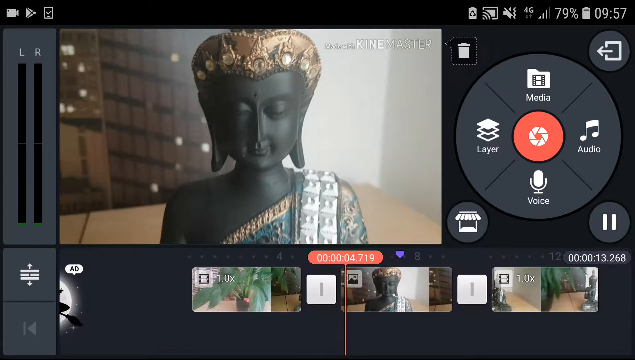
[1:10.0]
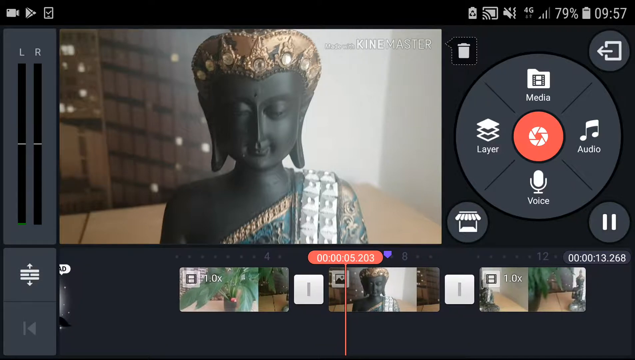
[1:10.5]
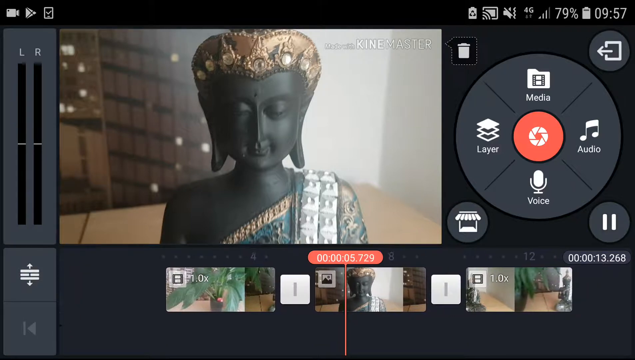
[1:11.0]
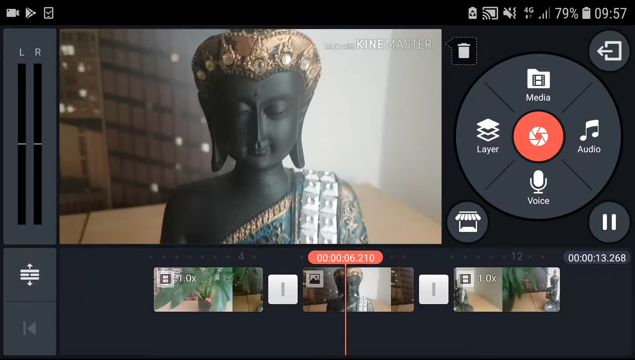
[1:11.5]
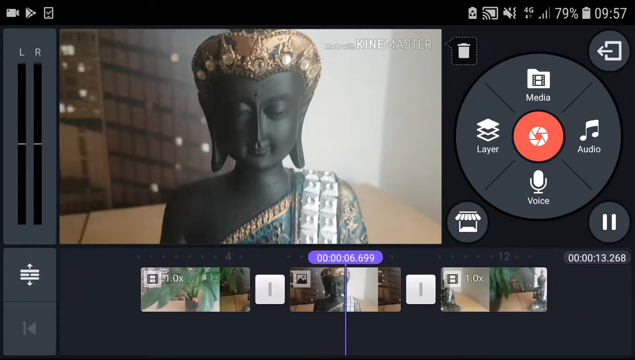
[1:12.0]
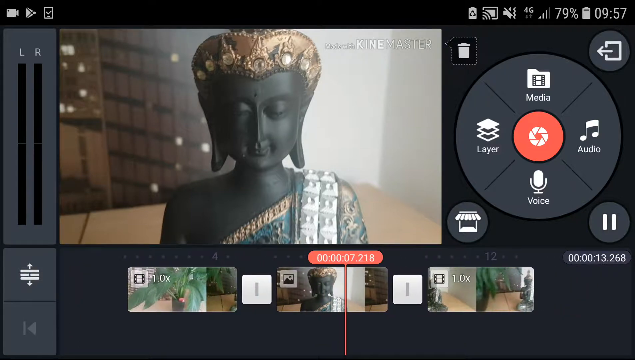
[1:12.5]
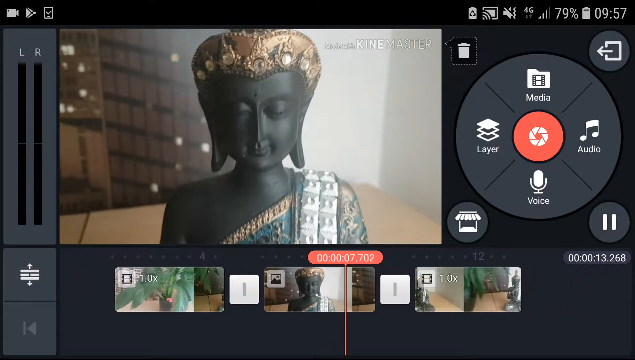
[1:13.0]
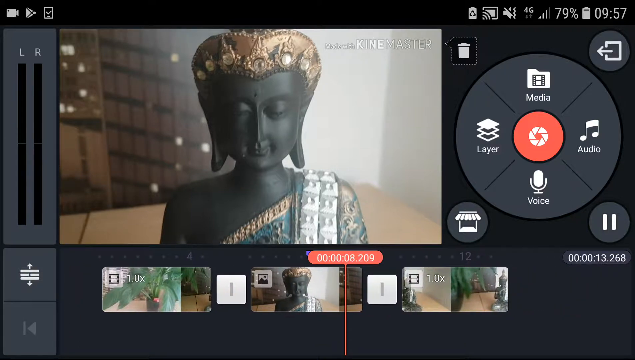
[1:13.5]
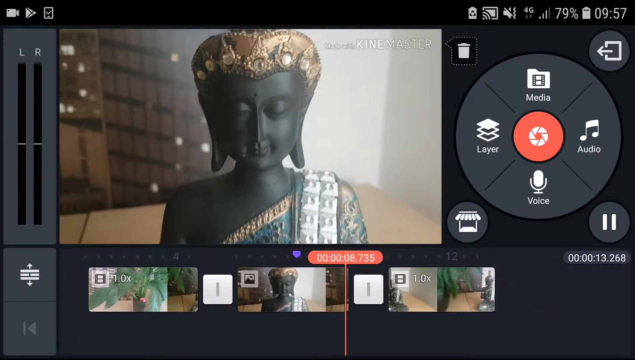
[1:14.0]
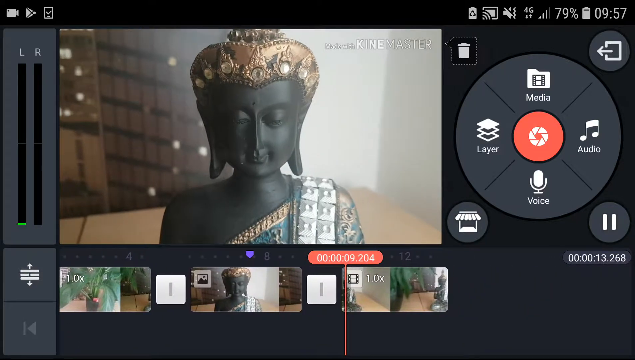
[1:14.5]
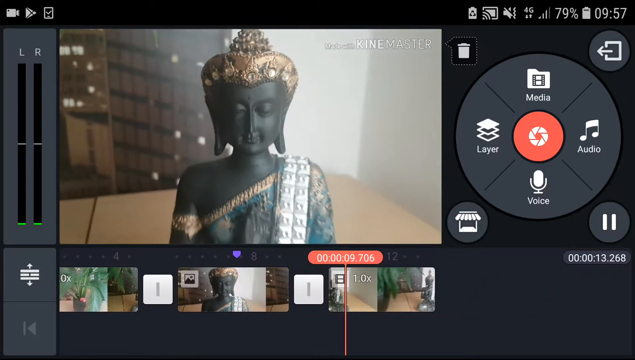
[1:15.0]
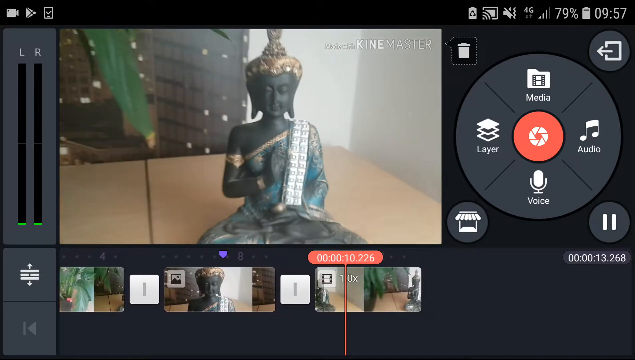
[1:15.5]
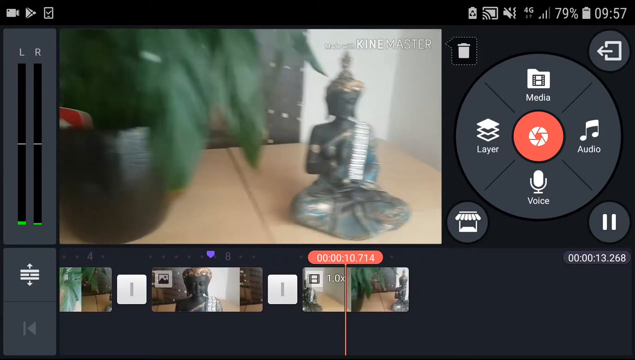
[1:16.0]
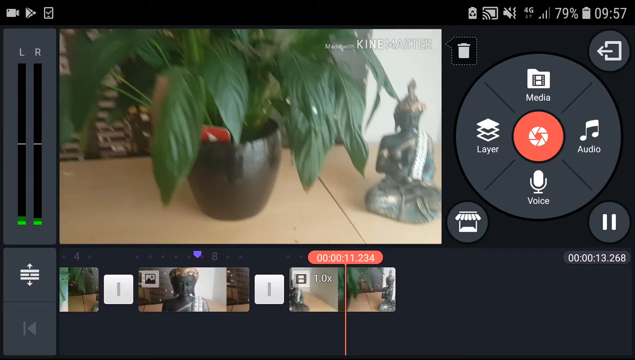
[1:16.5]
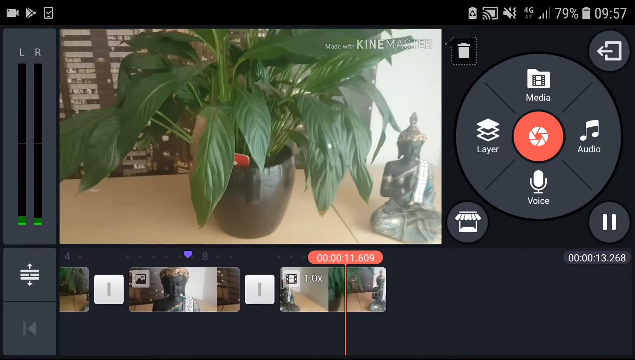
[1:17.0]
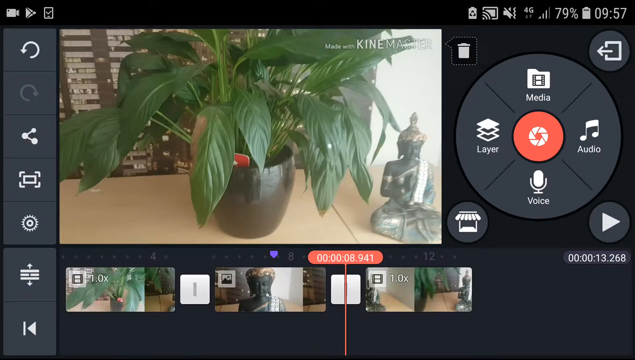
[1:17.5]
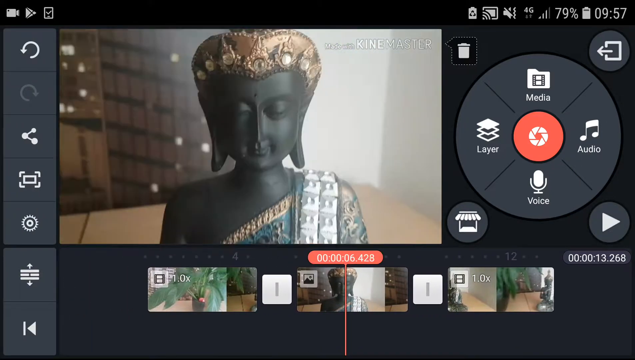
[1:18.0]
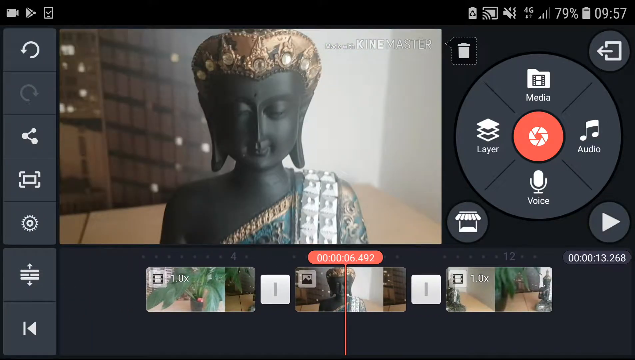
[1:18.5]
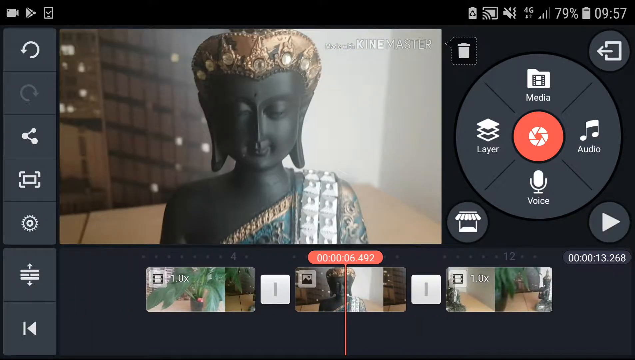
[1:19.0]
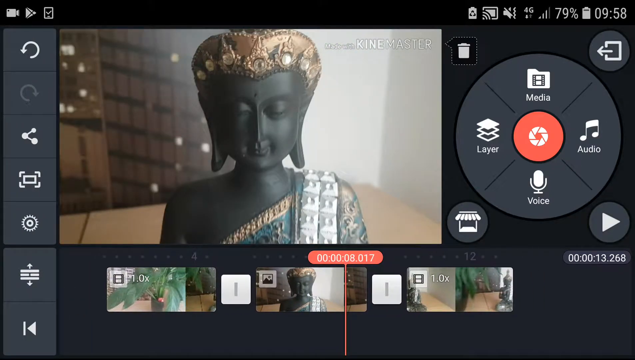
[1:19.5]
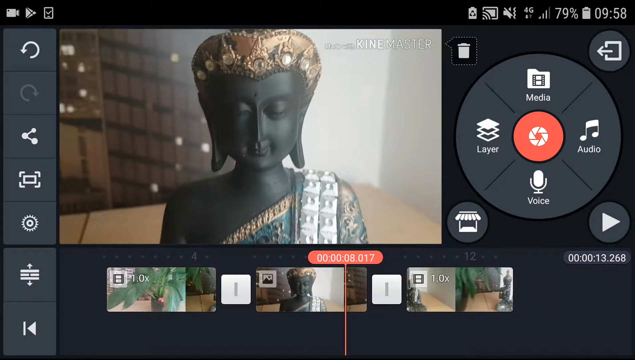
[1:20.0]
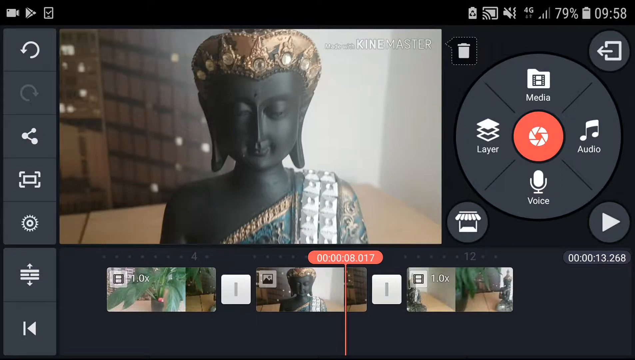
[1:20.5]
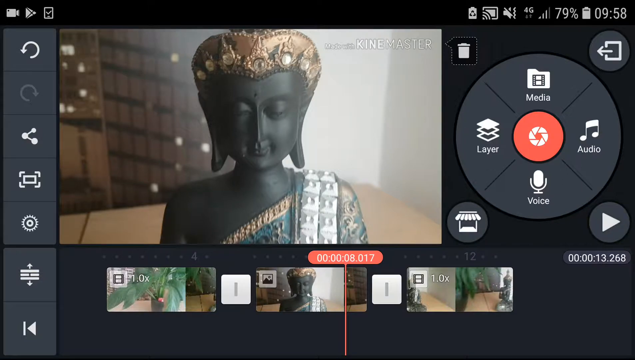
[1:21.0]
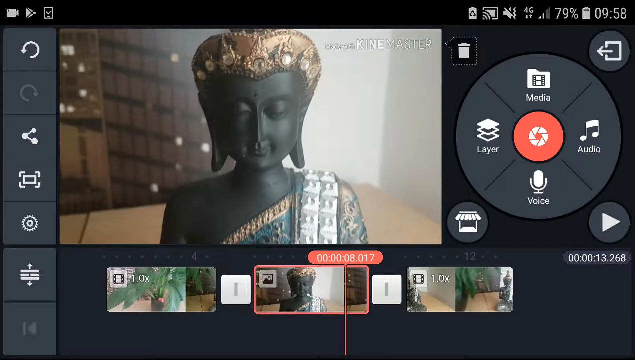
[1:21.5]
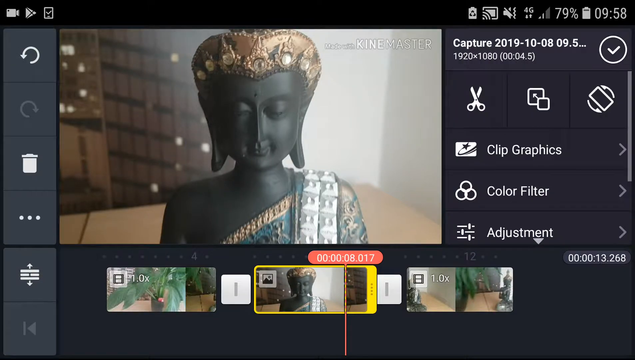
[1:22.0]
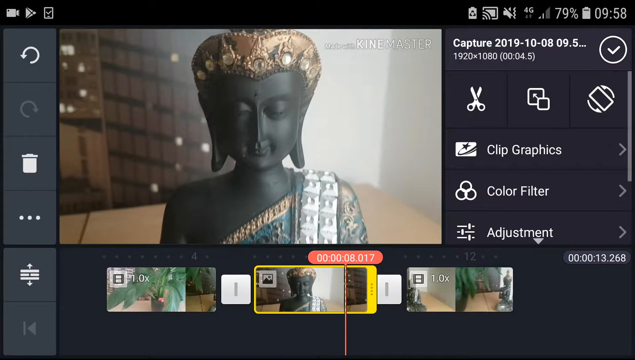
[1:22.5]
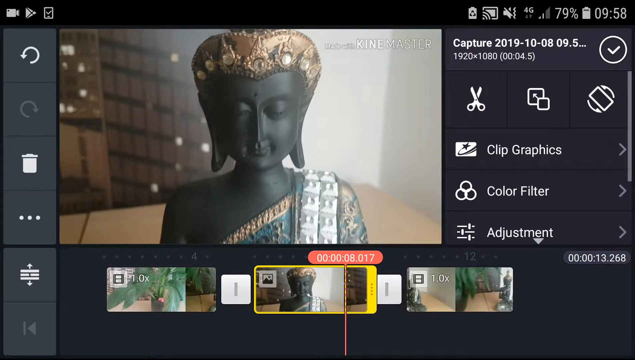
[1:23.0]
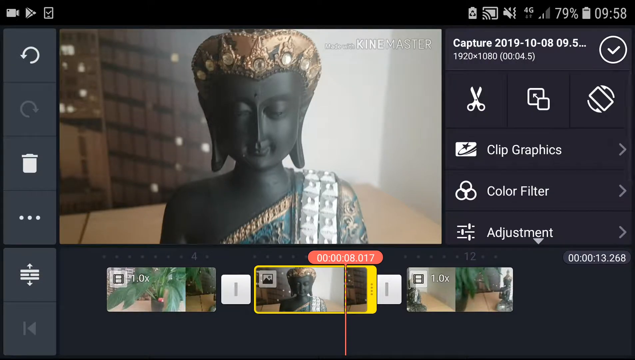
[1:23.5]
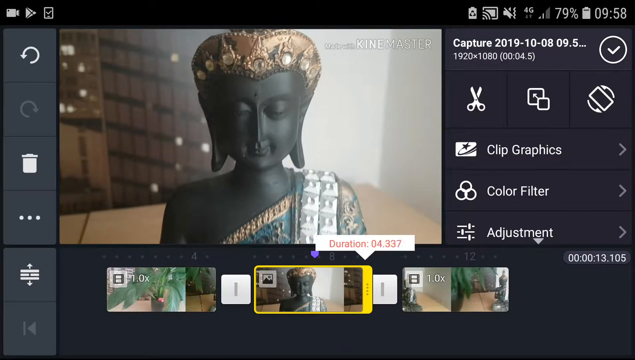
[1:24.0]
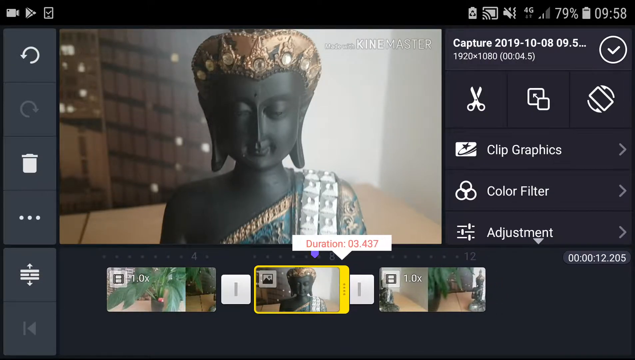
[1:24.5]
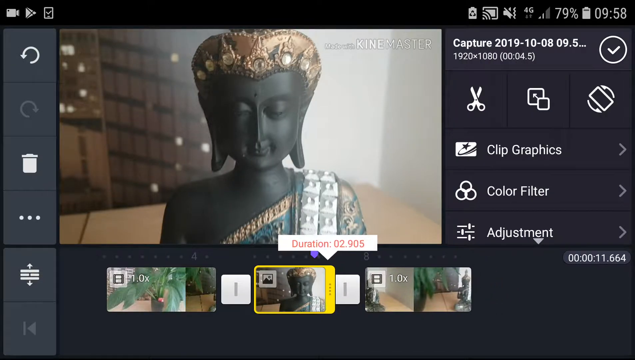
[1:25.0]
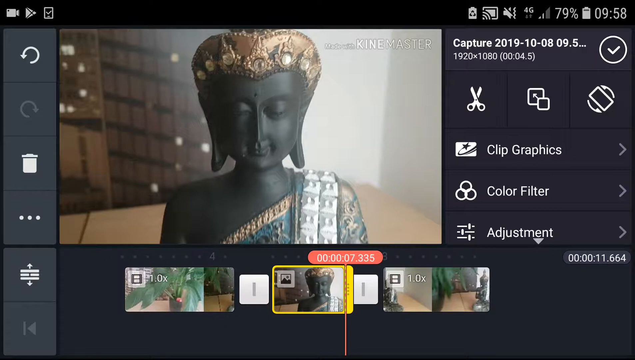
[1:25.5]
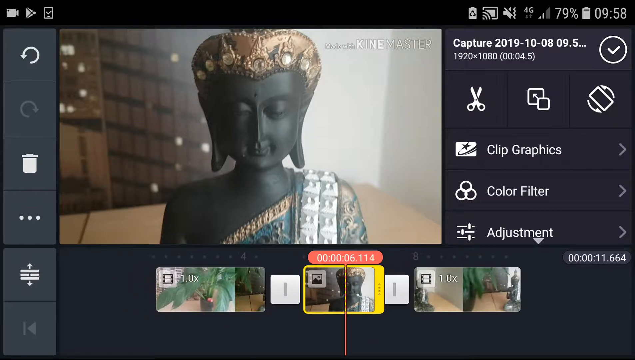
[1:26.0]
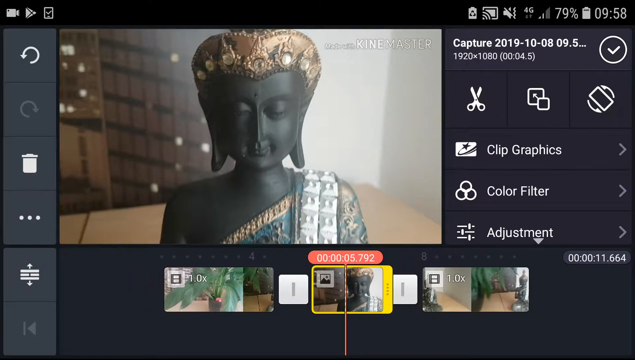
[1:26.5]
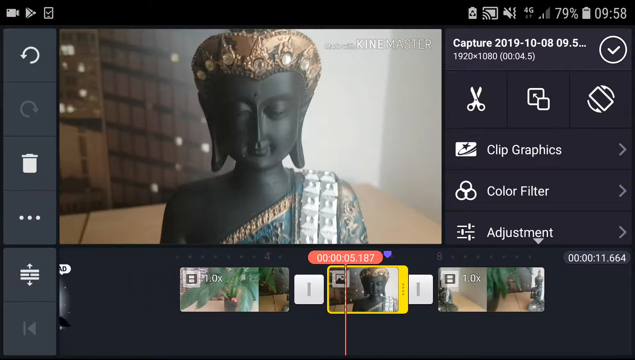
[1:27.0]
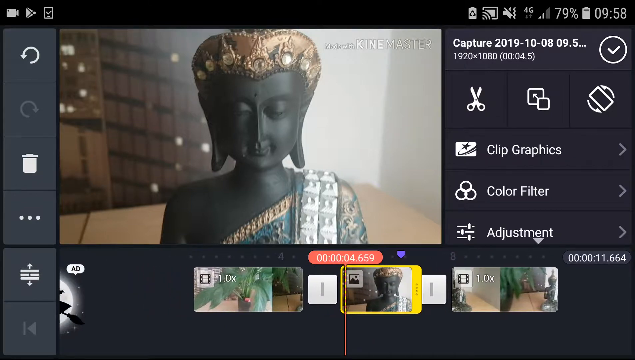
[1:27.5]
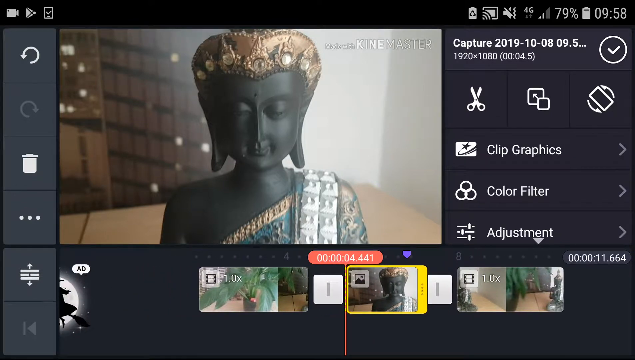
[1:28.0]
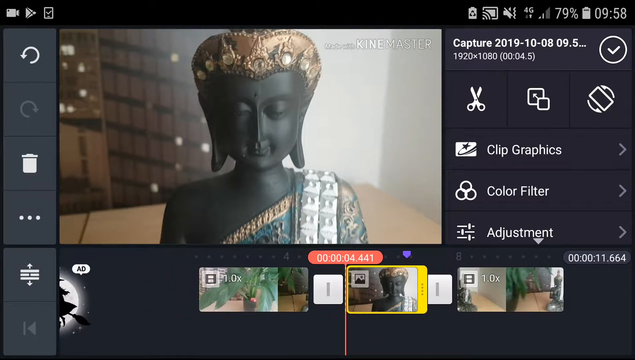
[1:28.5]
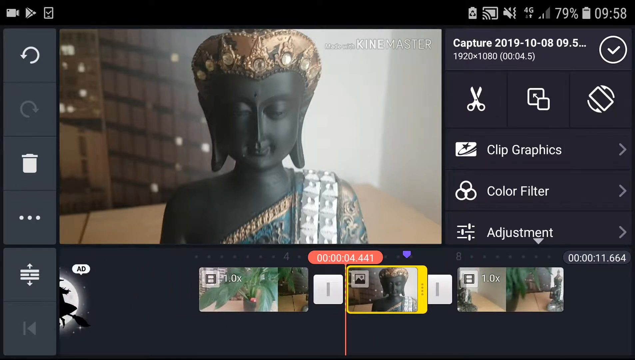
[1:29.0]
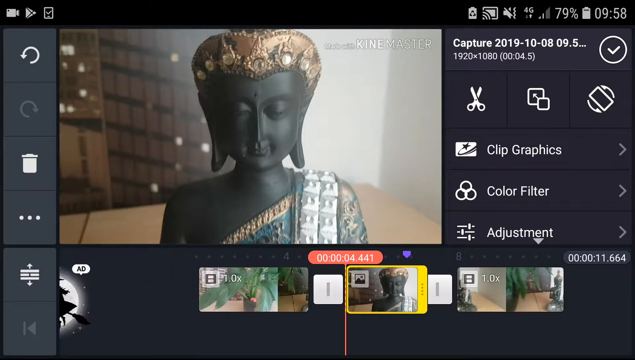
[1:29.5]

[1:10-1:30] On the left there is a left and right button, and at the bottom the little witch on the broom that says "an ad" is barely visible. The screen is back to the first view, with a circle that has "media" on top, "audio" on the right, "voice" on the bottom and "layer" on the left. Around it are a back button, a pause button, what looks like a little store, and a little trash can. The frame shows the doll, which has a gold crown and appears to wear a blue dress with something silver on it. The user goes through the frames, zooming out back onto the plant, then returns to the little doll and stops. They go to where the frame can be shortened, and the options appear to read "clip graphics", "color filter", "adjust" and "cut". Then the screen returns to where it started. It is still 9:57 p.m. with 79 percent battery.